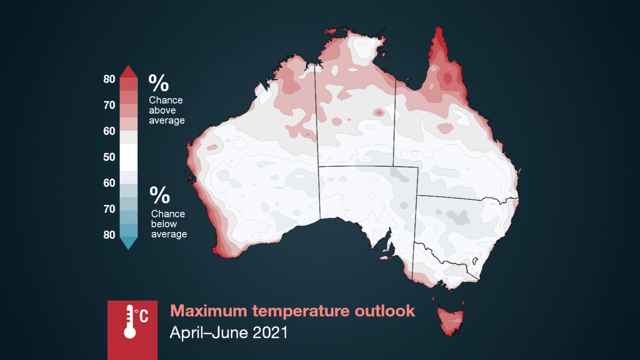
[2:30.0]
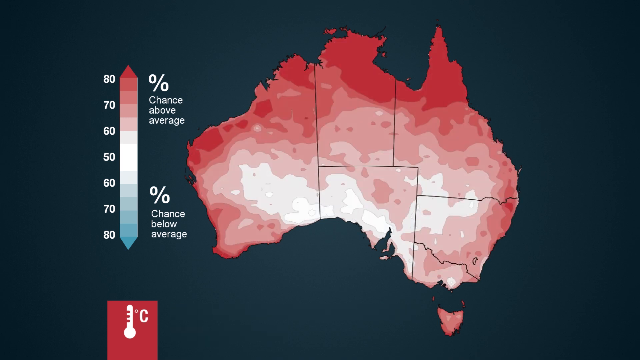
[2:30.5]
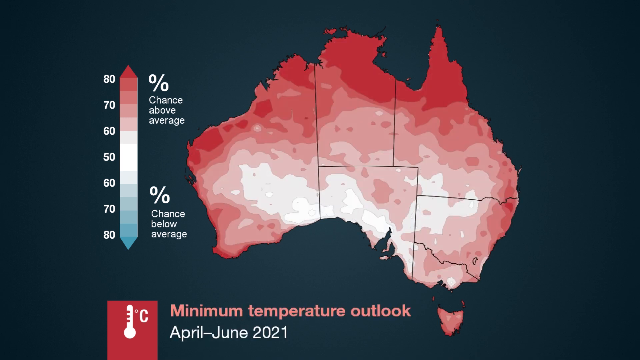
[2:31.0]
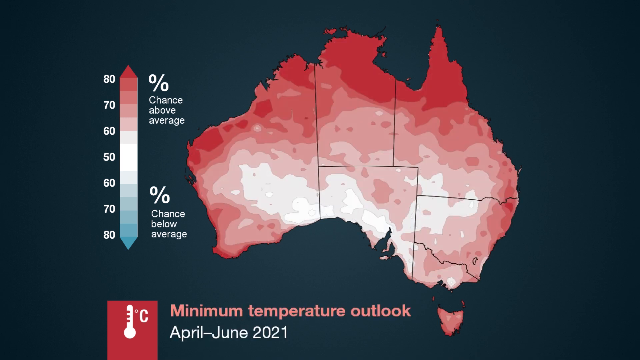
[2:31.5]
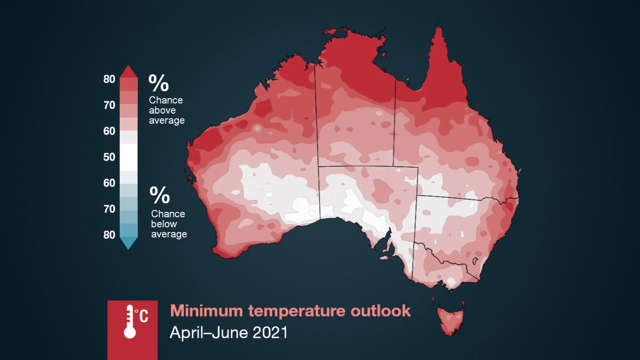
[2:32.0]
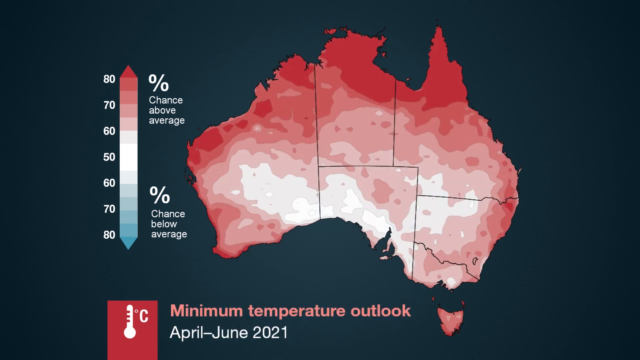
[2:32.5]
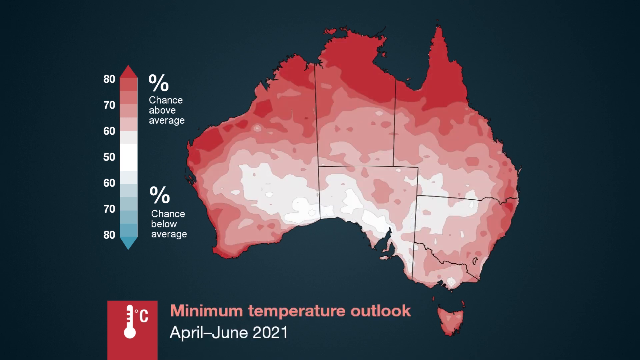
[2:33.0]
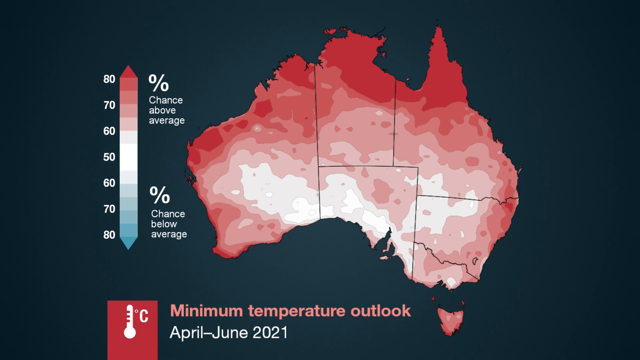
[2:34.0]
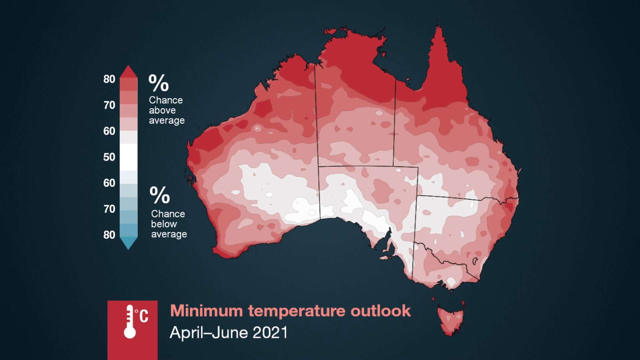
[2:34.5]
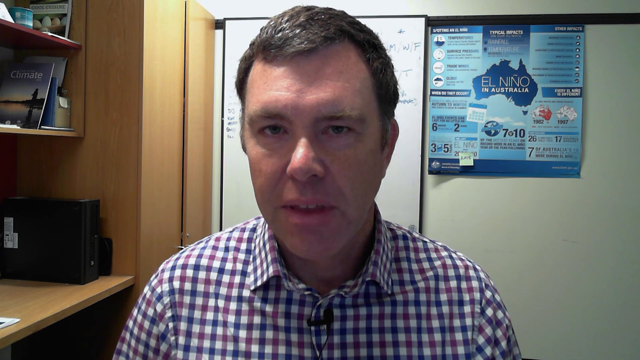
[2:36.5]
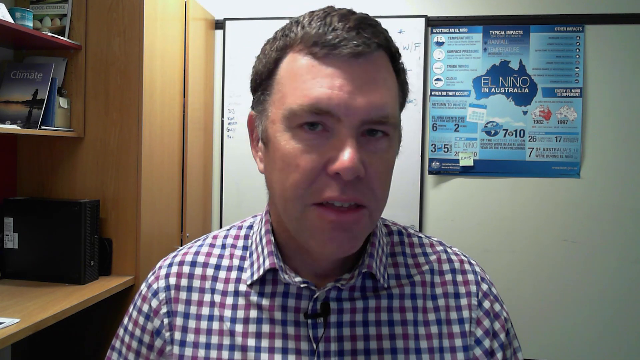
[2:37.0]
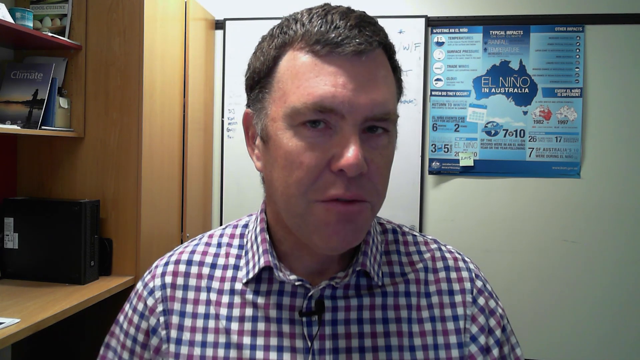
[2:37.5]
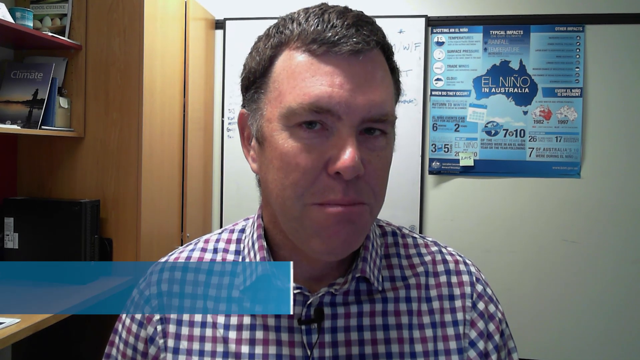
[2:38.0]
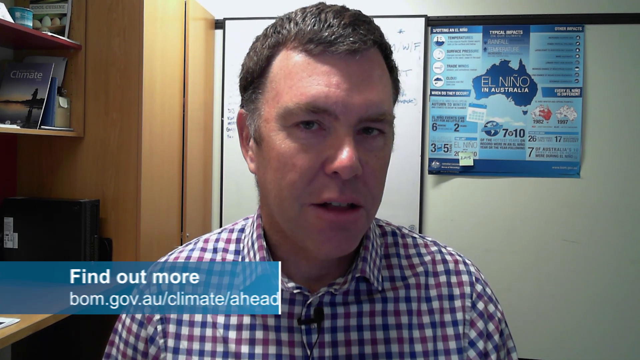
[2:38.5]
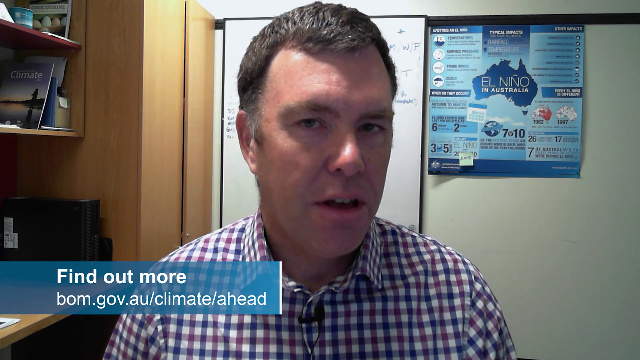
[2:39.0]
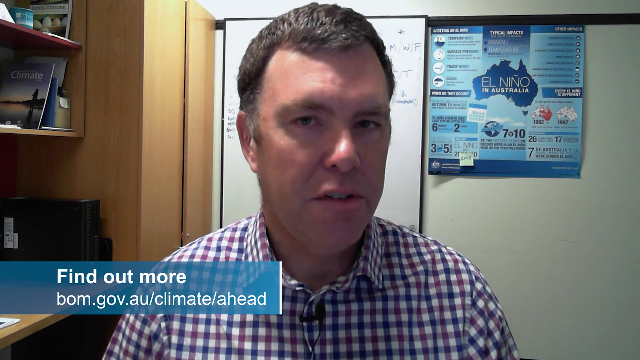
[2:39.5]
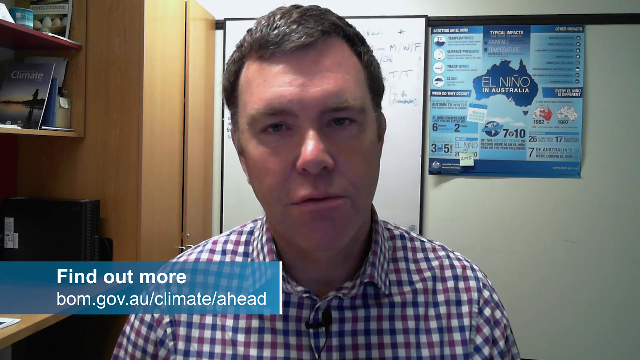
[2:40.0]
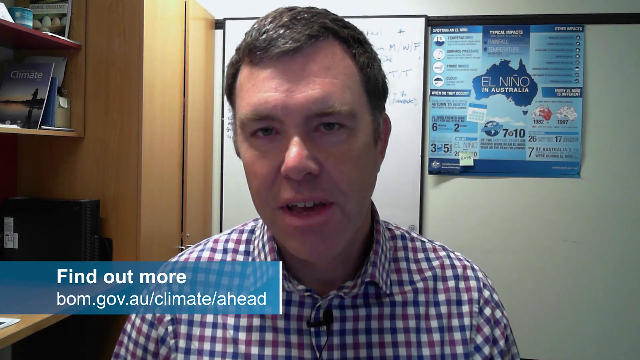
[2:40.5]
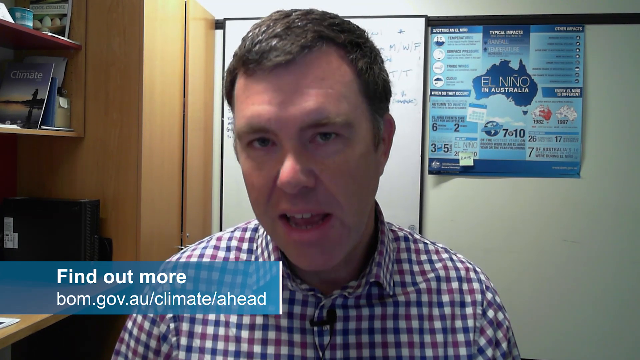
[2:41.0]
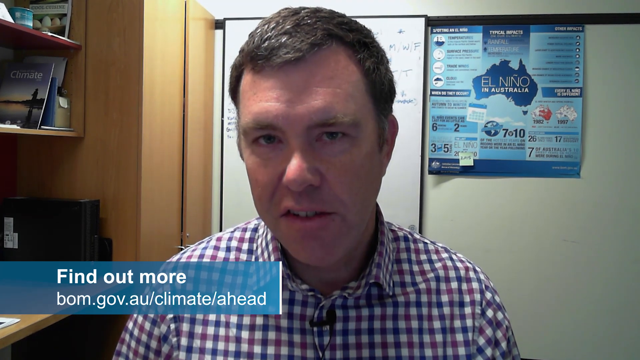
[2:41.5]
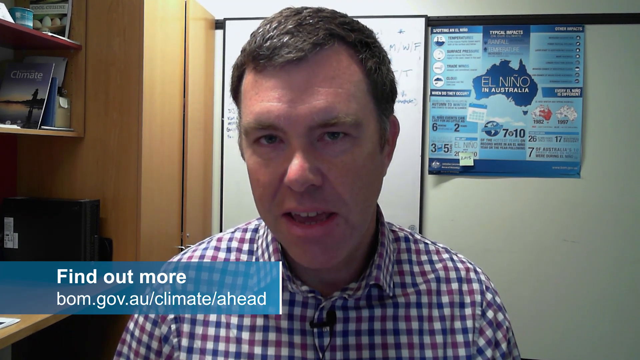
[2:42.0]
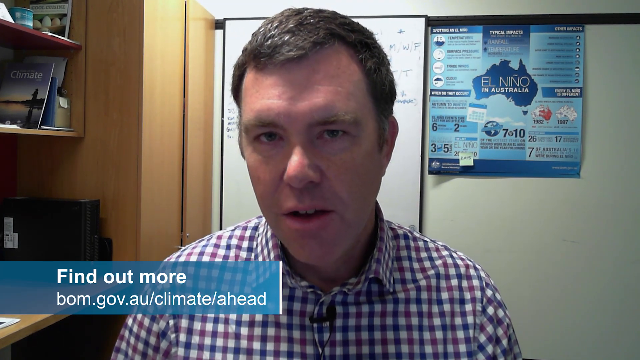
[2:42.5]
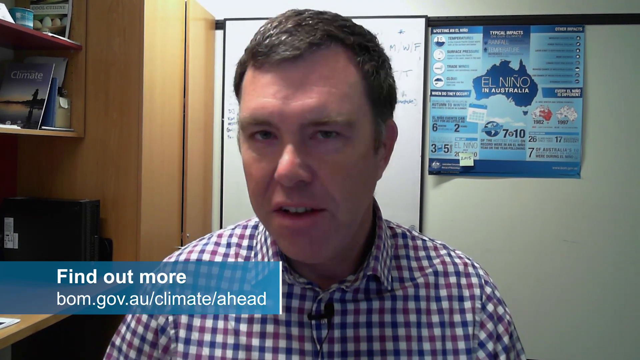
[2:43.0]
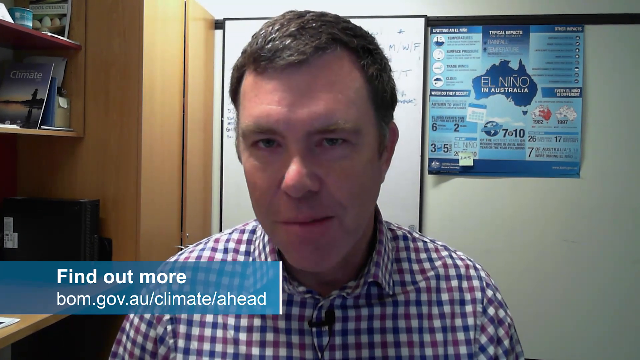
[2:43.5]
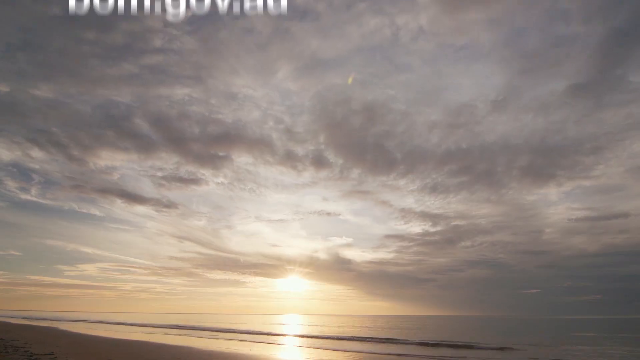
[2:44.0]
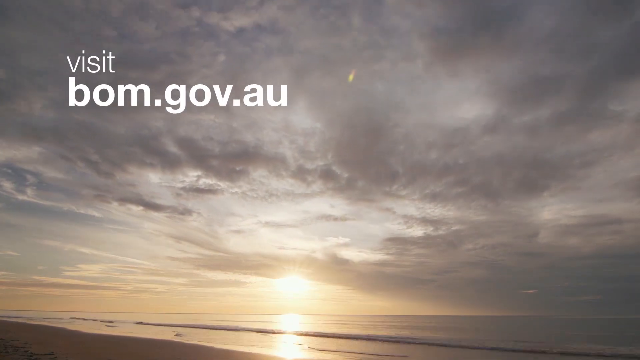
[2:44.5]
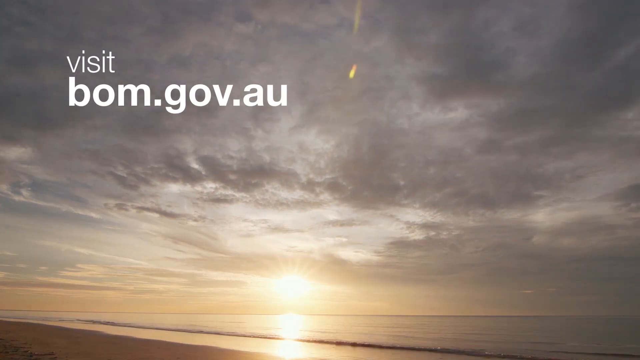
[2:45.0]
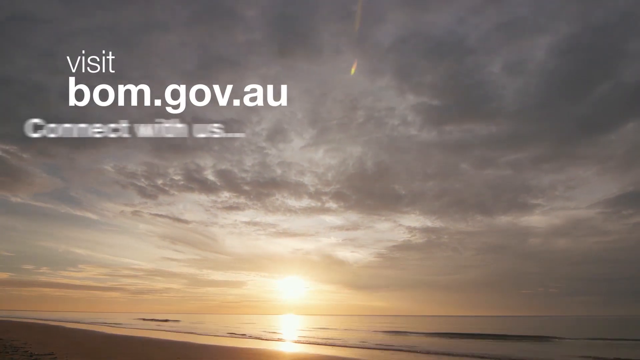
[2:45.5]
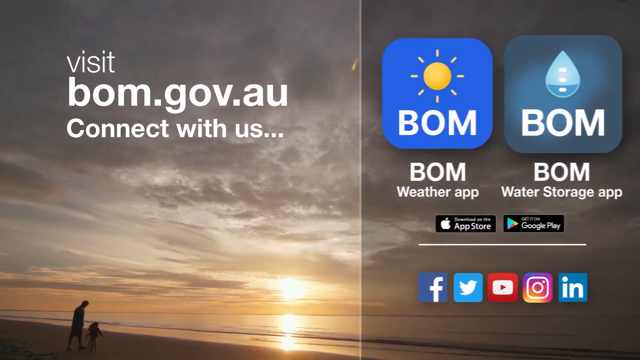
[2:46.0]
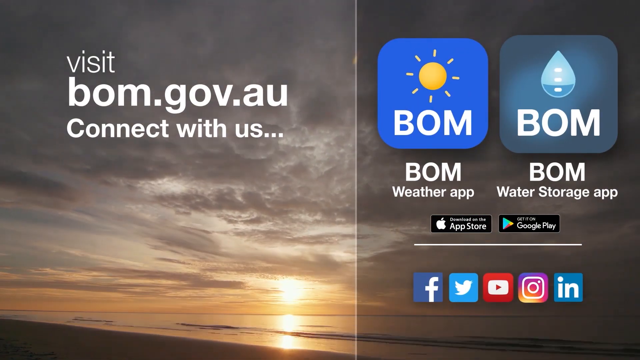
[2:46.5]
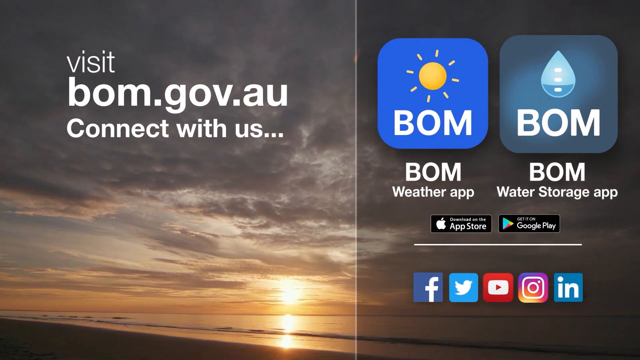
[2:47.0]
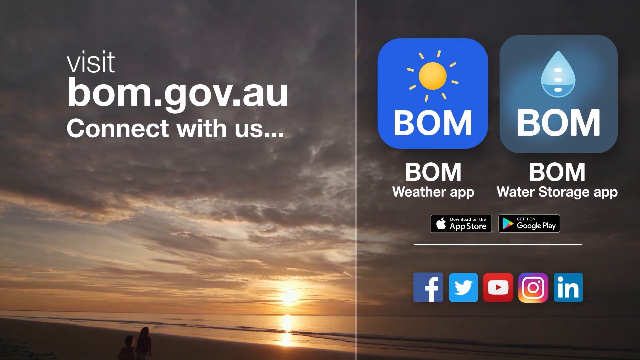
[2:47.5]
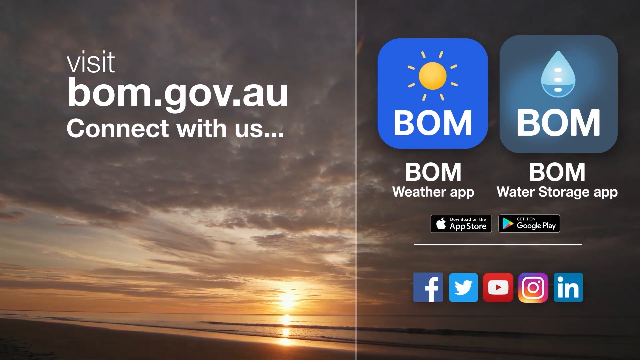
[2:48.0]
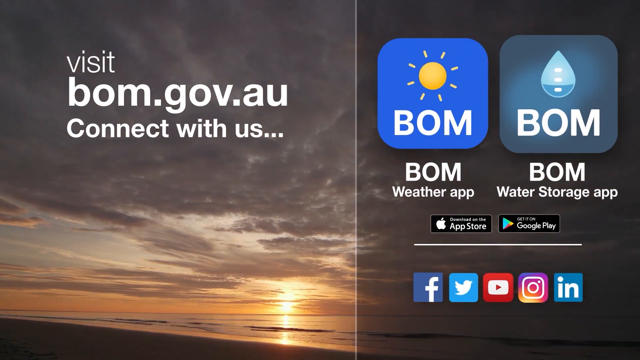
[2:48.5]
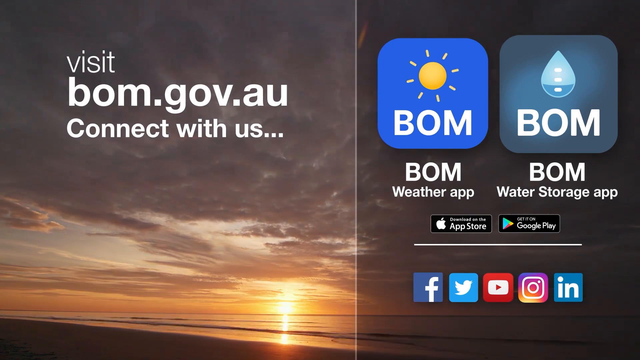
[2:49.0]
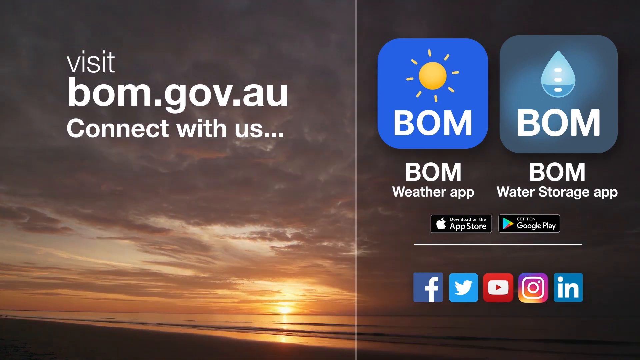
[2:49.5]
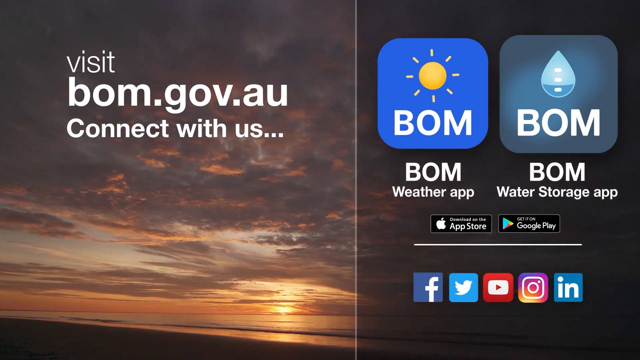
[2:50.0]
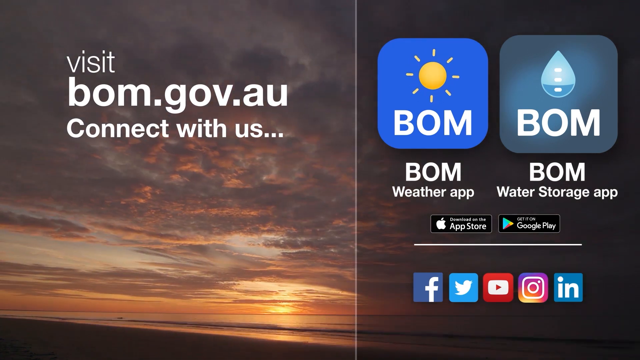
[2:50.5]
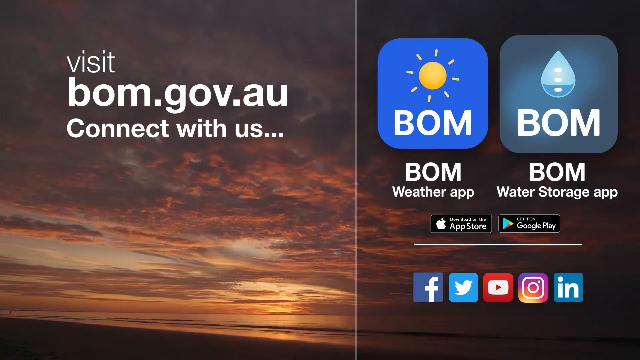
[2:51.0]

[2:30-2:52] A map of Australia shows the minimum temperature outlook for April to June 2021, against a scale ranging from 80 orange down to 80 blue; the northern areas of Australia show strong orange regions. The video then switches to the climatologist being interviewed in his office, and a small panel on a blue rectangle flashes on screen reading "Find out more at balm.gov.au/climate/ahead". The video then transitions to a sky with what appears to be the sun setting. One half of the screen shows "visit balm.gov.au" and "connect with us", while the other side shows apps to download: a Balm app, a weather app and a Balm water storage app. Underneath are links to social media platforms such as LinkedIn, Facebook, Twitter, YouTube and Instagram.